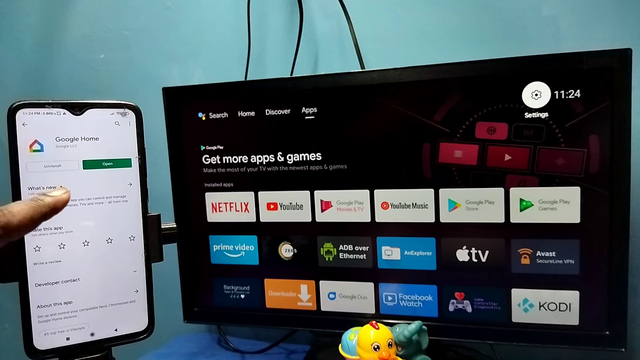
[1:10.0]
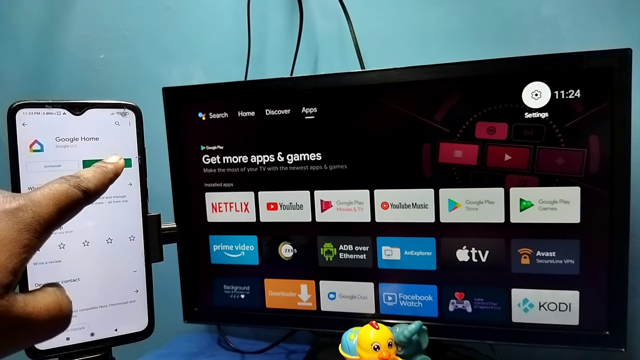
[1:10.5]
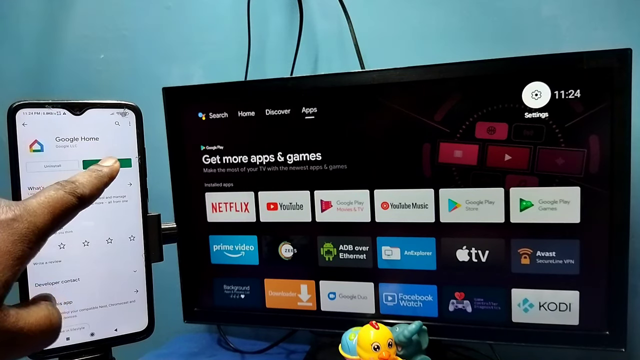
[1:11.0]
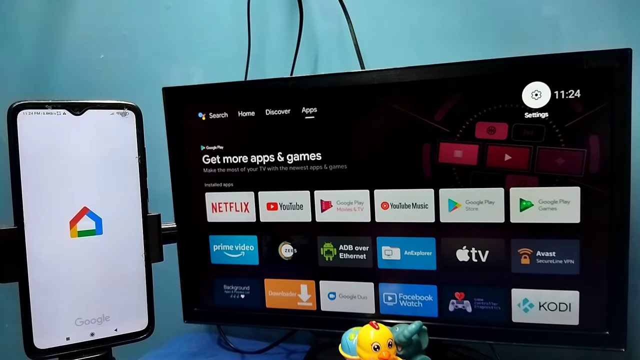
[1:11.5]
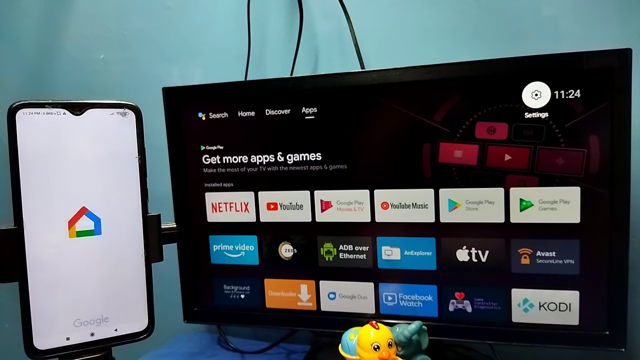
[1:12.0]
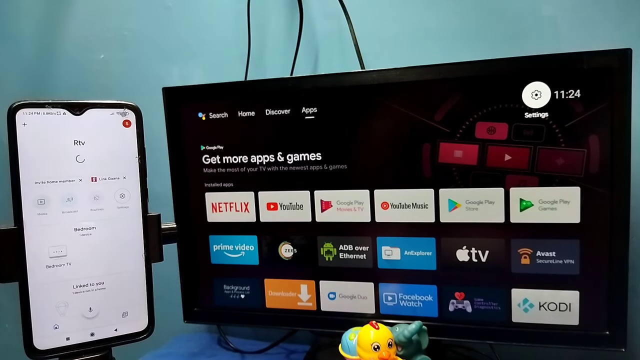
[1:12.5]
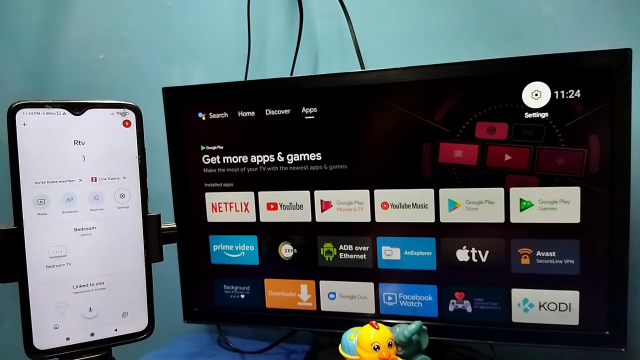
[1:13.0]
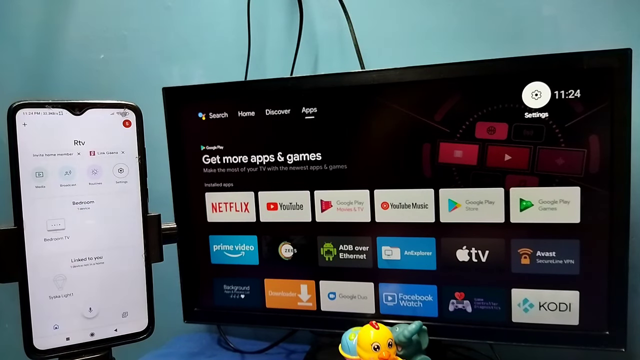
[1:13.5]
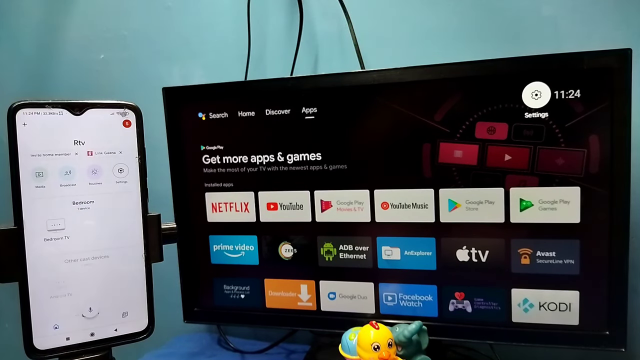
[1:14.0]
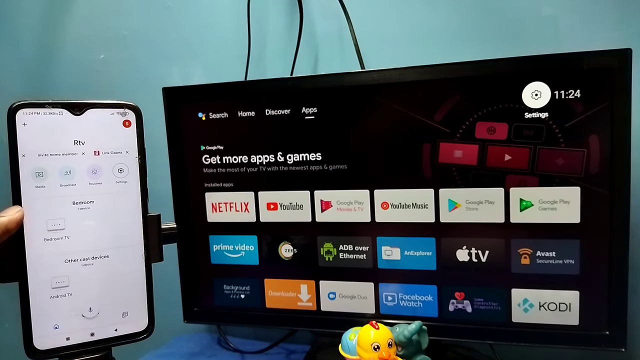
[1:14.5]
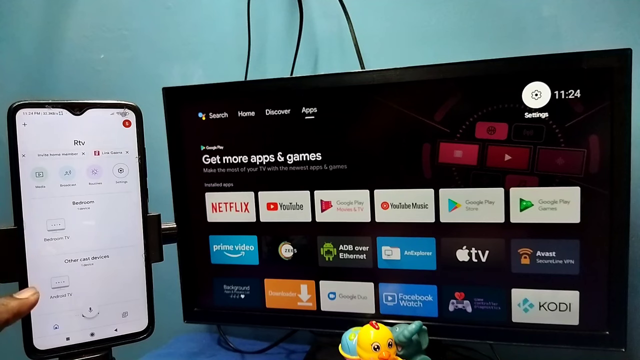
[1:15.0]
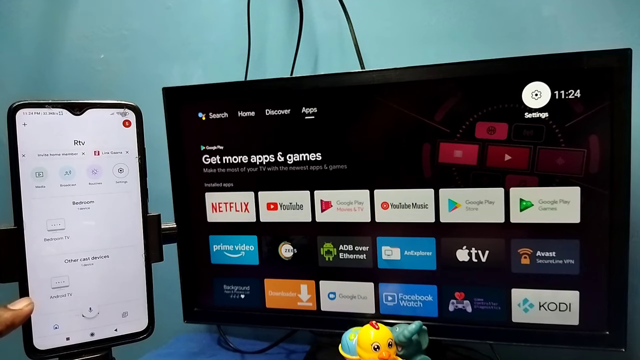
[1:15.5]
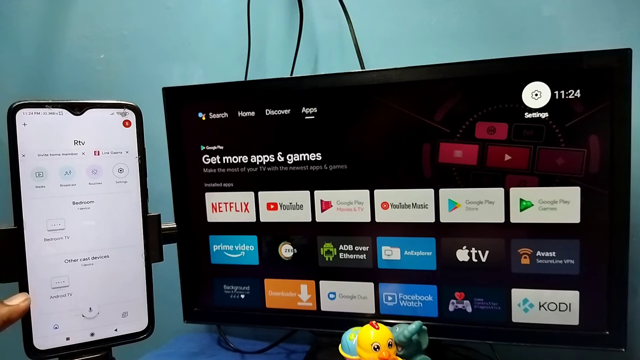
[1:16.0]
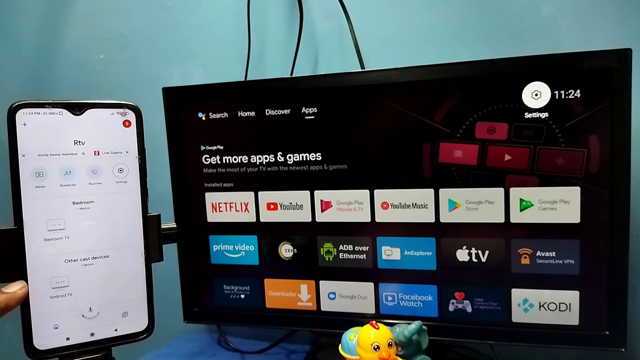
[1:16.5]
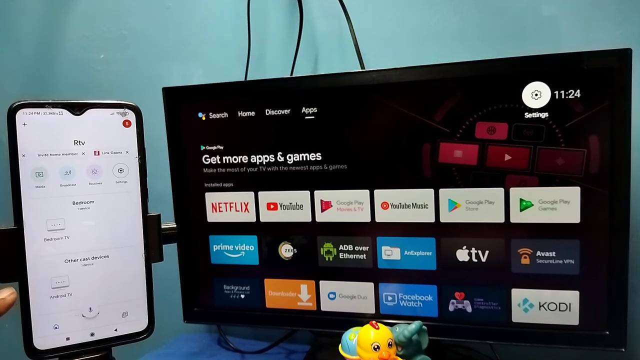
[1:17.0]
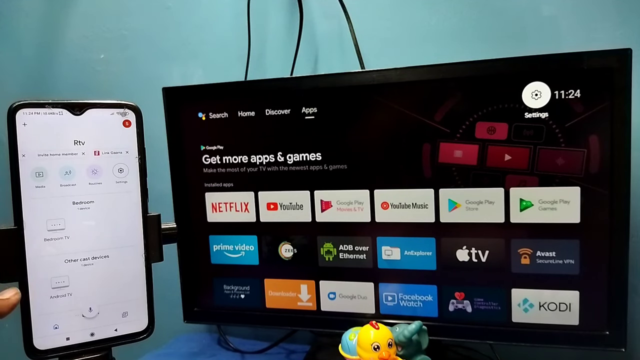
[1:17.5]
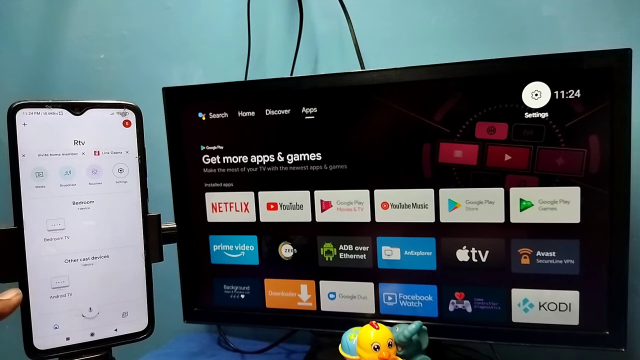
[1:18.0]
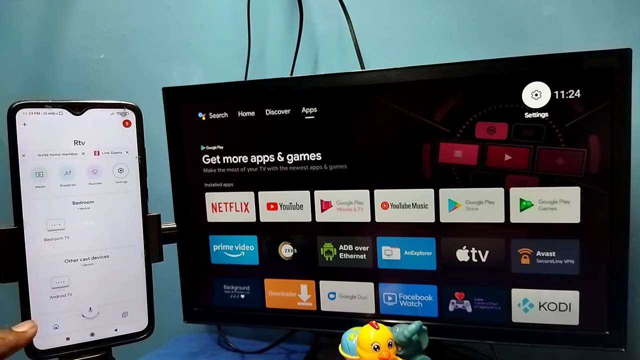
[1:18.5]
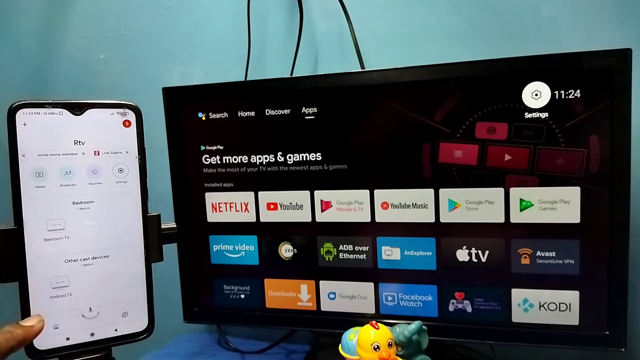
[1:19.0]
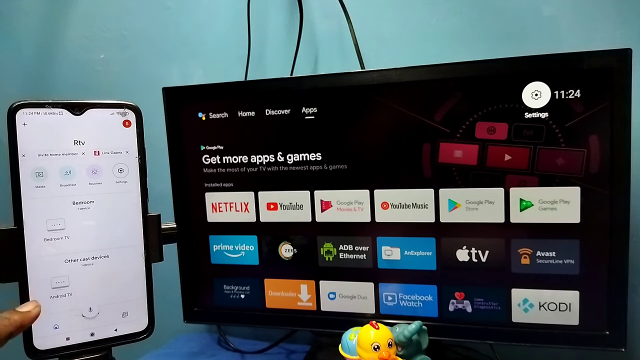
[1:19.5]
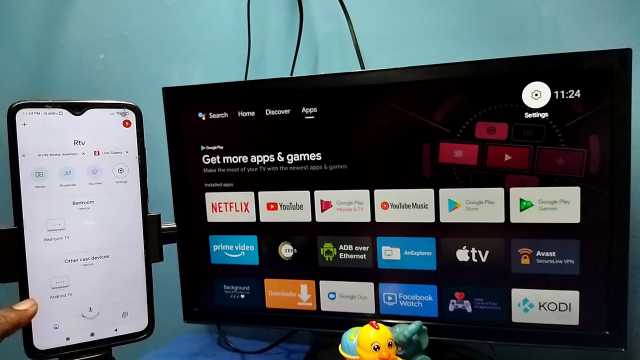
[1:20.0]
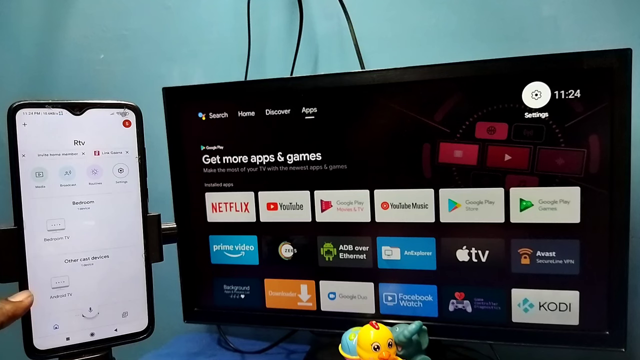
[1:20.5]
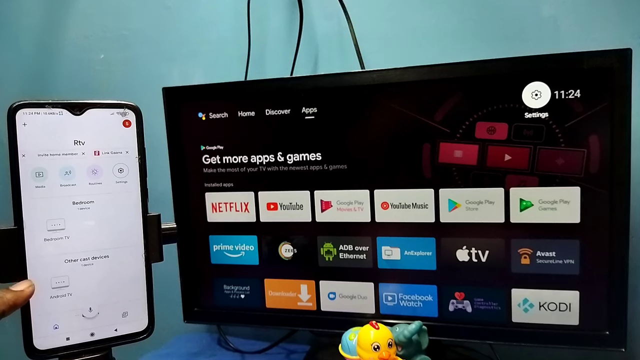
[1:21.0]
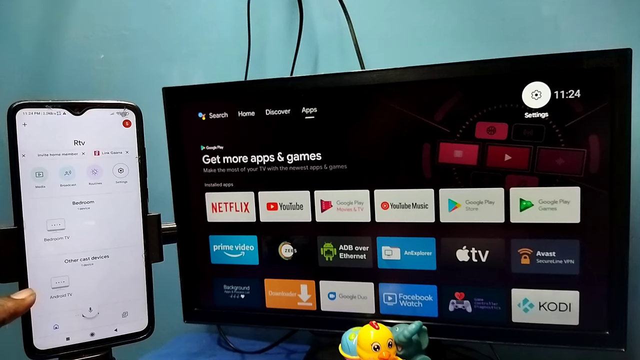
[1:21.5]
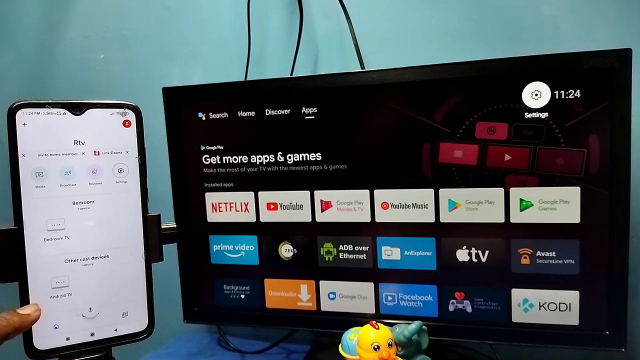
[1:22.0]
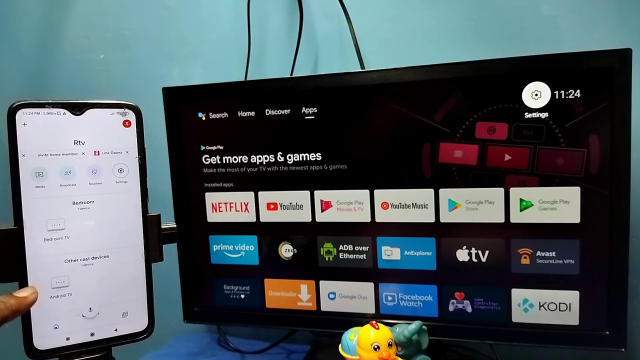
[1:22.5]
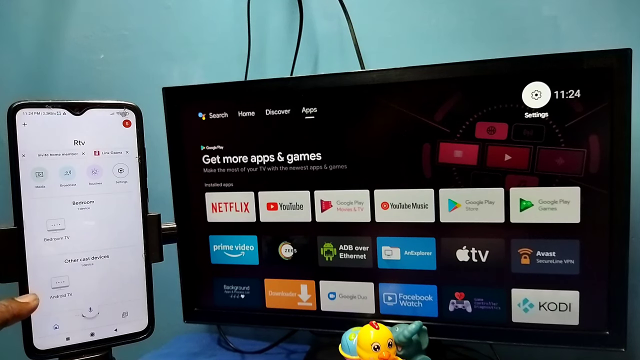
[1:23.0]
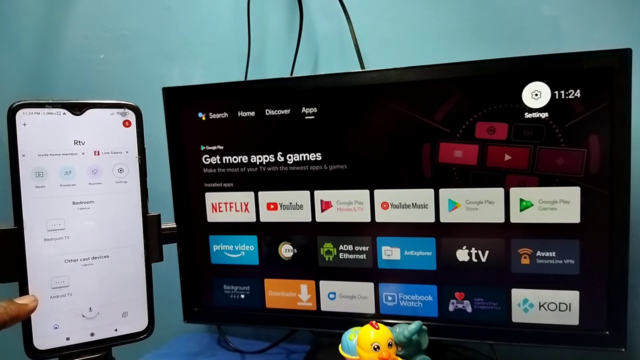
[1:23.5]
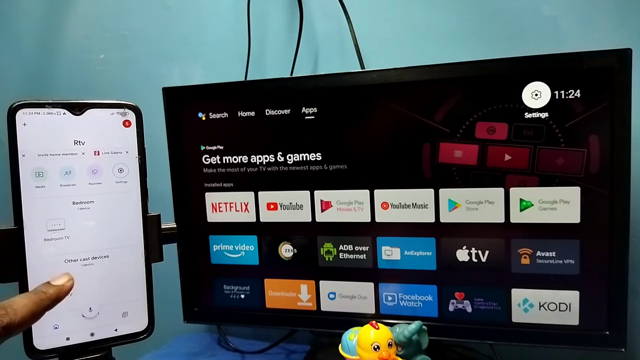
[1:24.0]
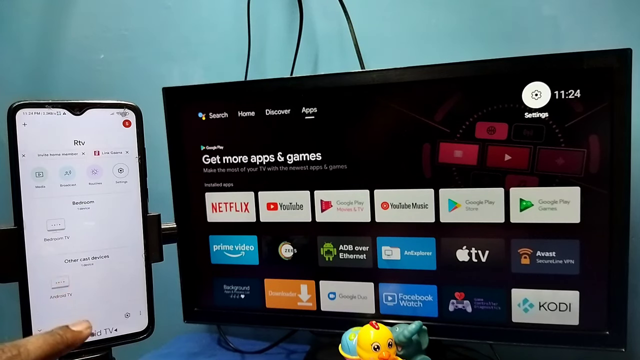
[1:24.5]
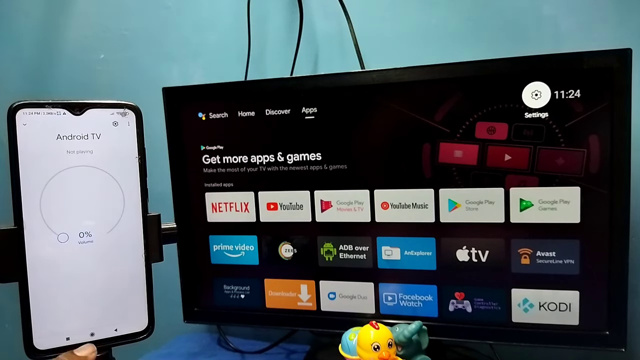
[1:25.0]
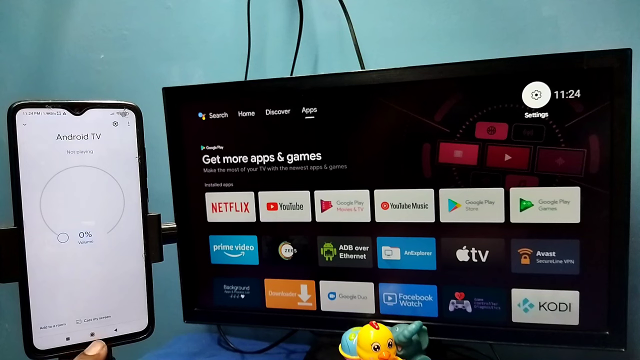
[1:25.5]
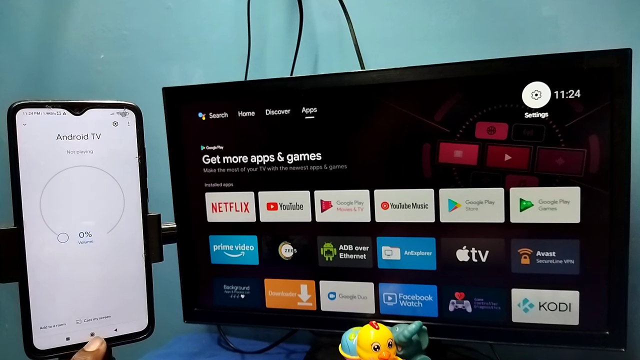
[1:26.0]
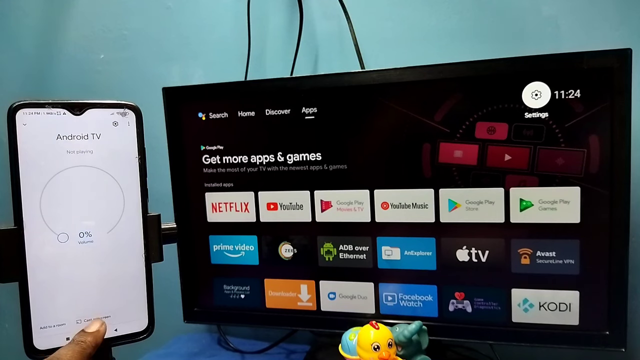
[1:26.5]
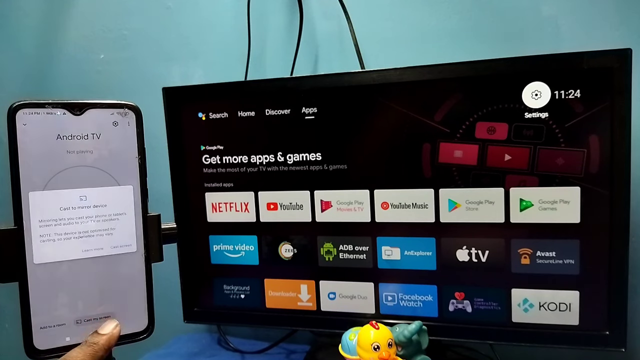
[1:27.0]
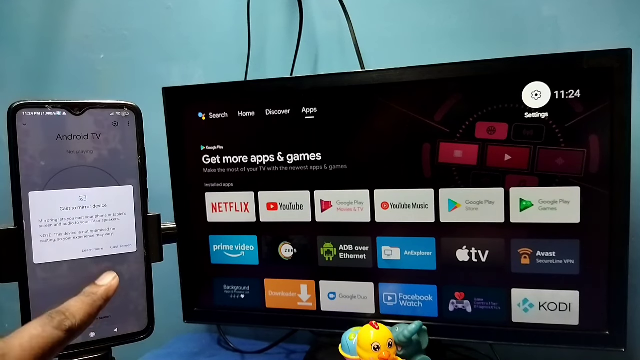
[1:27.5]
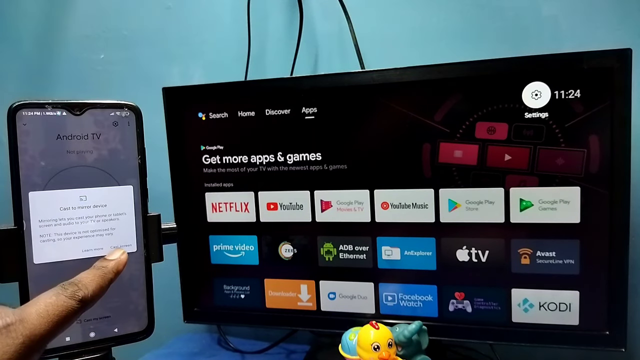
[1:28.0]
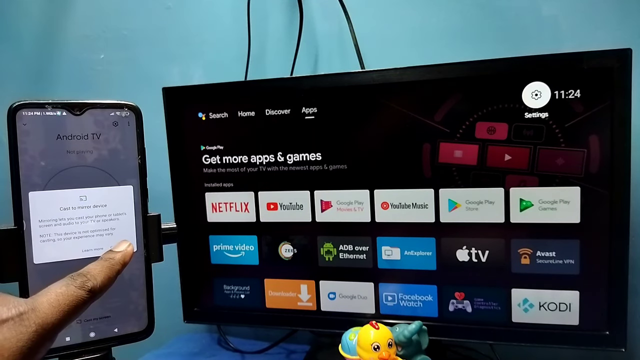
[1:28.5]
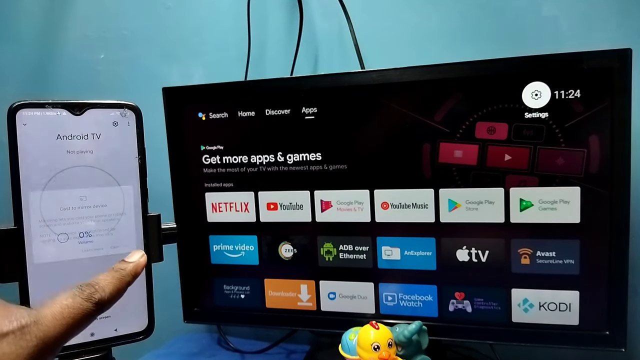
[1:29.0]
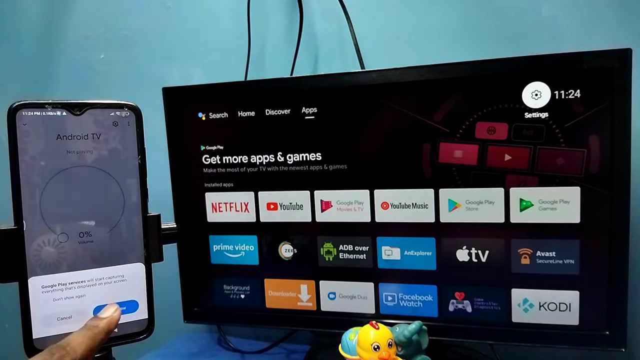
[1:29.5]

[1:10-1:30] A hand on the left points to the cell phone, which is on Google Home, and apparently goes to install Android TV. A Google Home message pops up with a green button below it, apparently the install button or possibly update, and they tap it. A TV screen then comes up on the phone and they point at it. Then Android TV comes up, a message appears and is cleared, and another message appears. Everything in this part is on the cell phone.